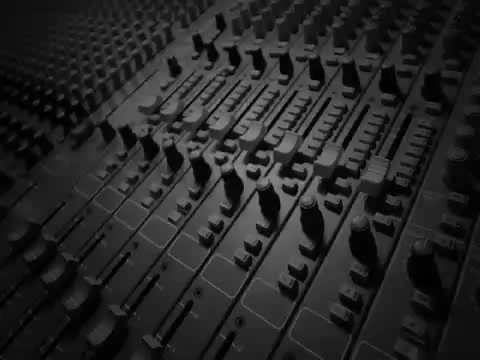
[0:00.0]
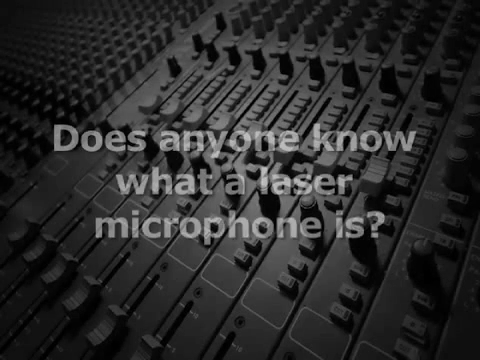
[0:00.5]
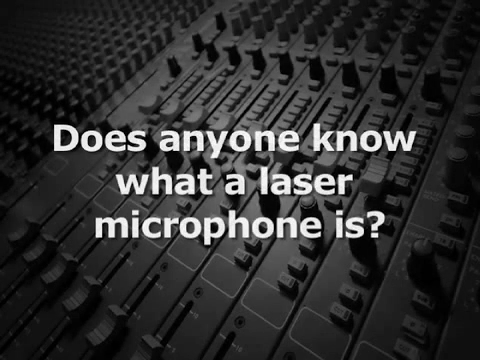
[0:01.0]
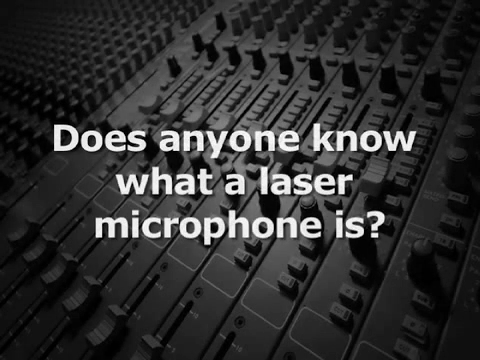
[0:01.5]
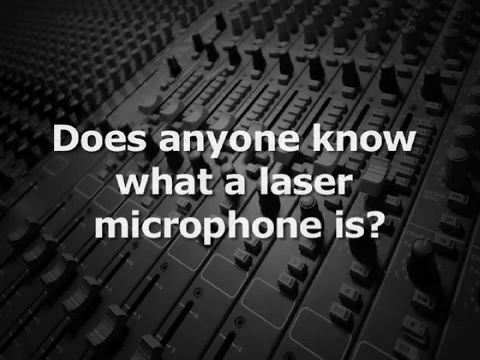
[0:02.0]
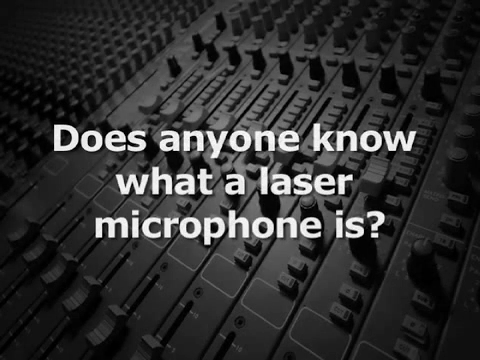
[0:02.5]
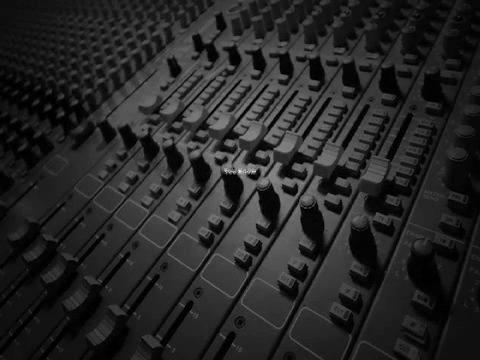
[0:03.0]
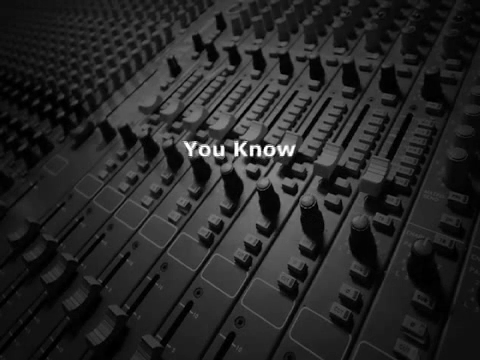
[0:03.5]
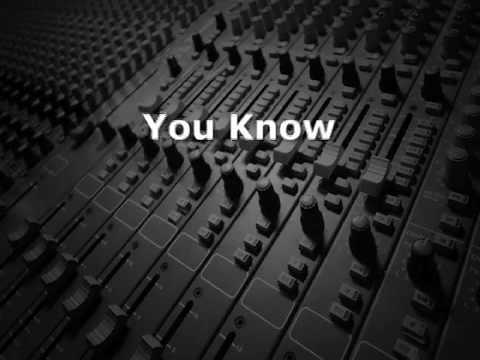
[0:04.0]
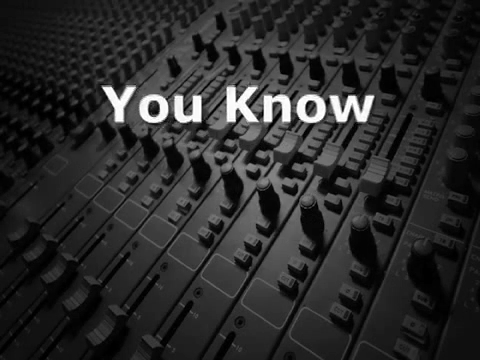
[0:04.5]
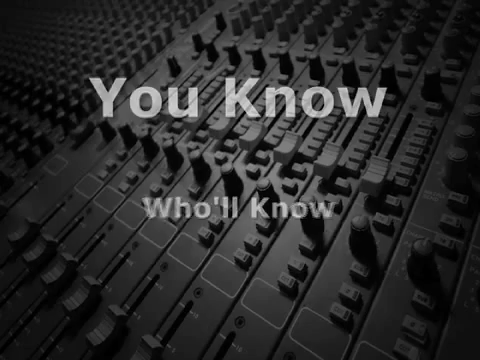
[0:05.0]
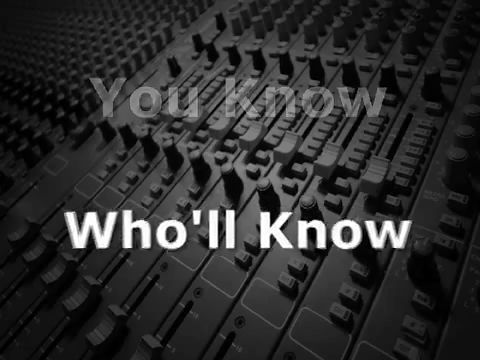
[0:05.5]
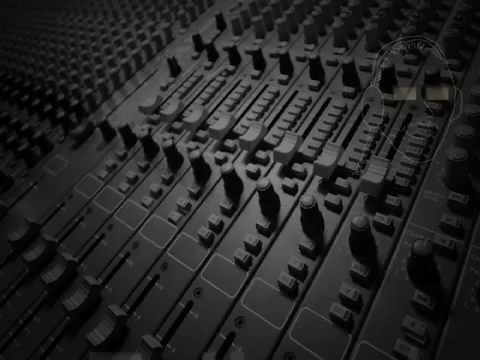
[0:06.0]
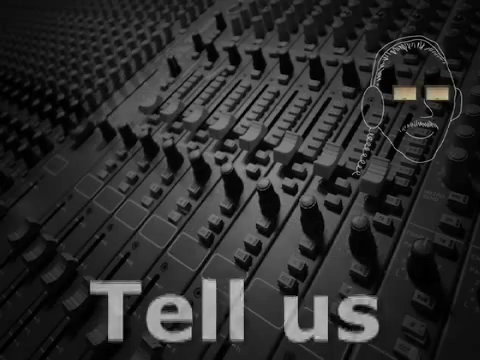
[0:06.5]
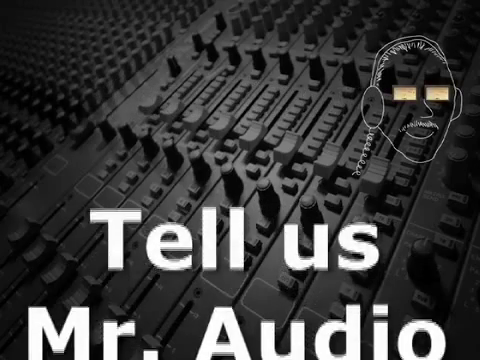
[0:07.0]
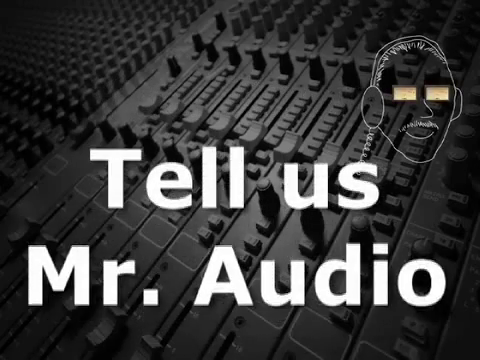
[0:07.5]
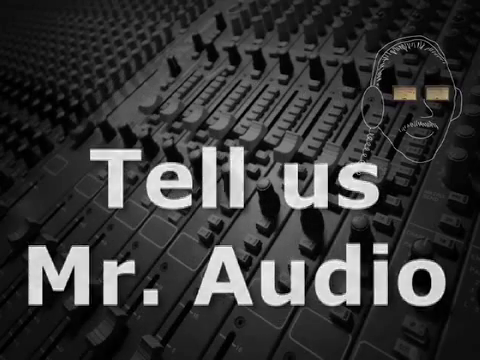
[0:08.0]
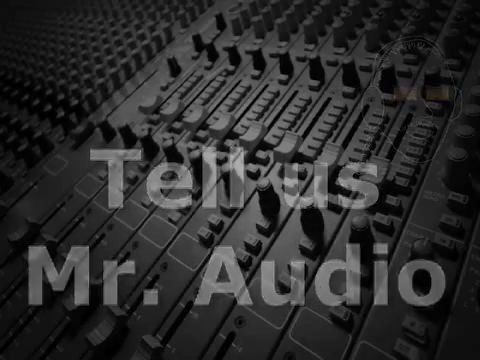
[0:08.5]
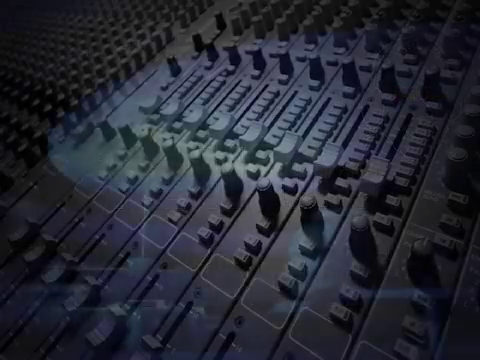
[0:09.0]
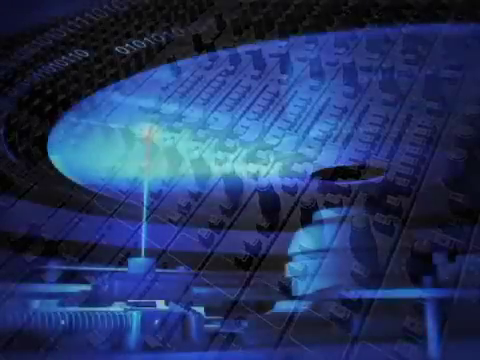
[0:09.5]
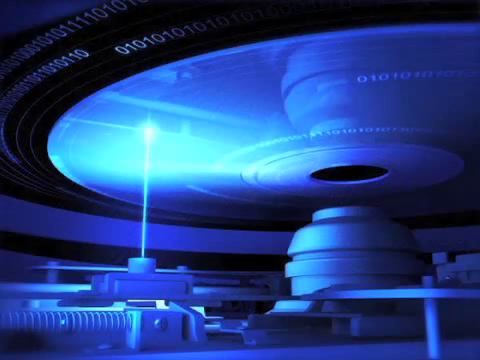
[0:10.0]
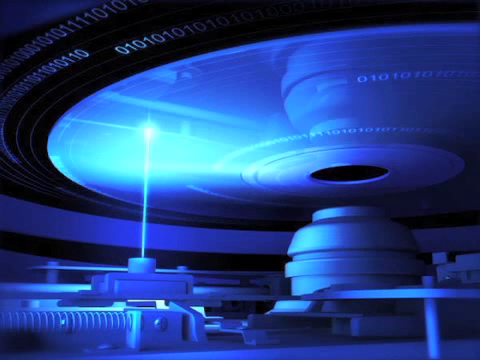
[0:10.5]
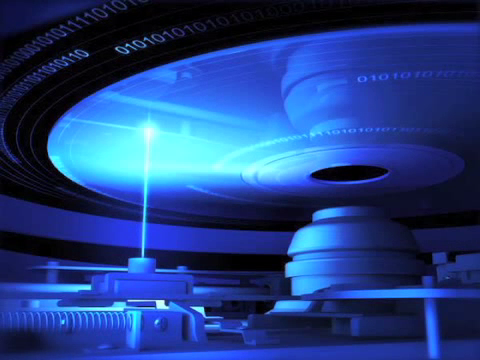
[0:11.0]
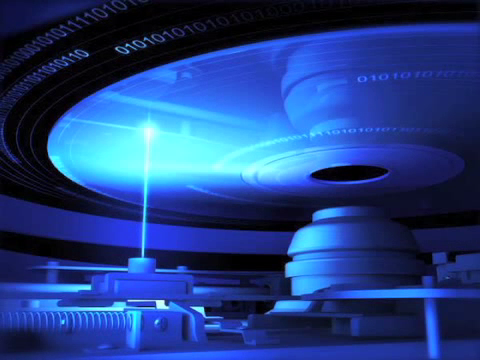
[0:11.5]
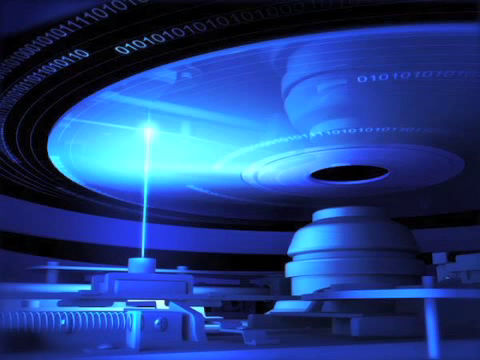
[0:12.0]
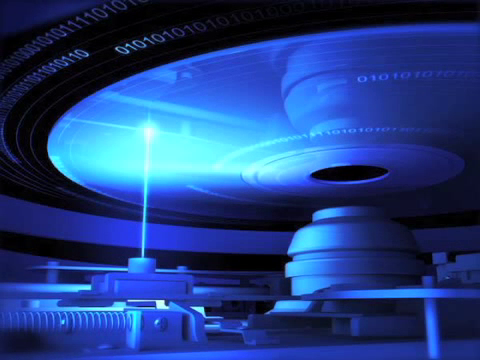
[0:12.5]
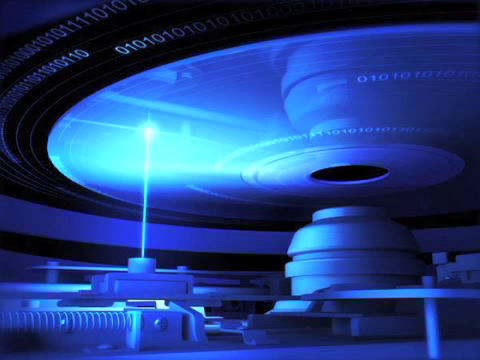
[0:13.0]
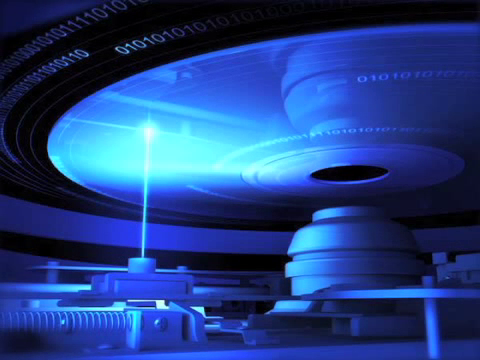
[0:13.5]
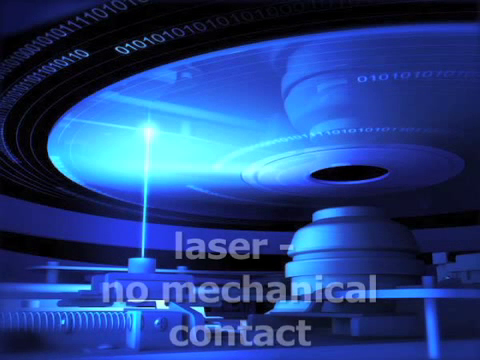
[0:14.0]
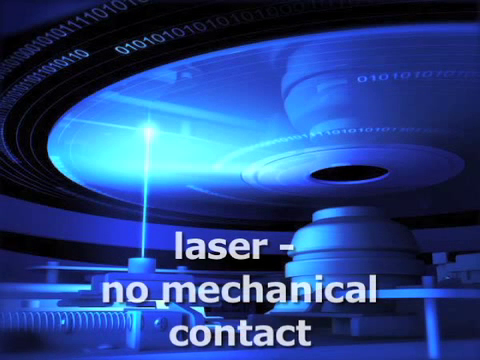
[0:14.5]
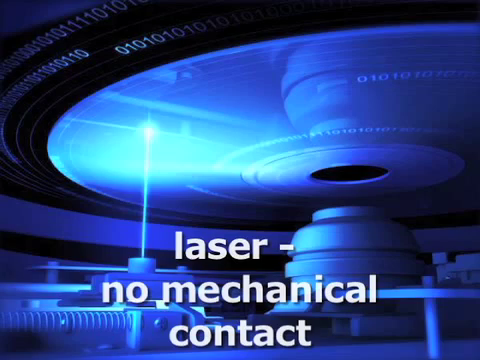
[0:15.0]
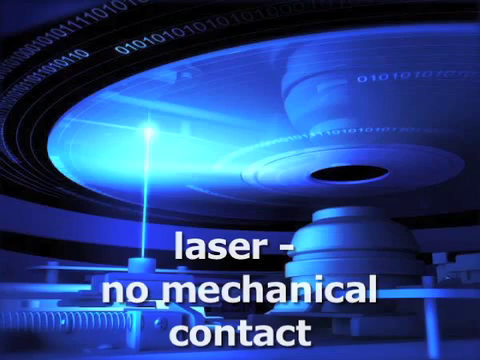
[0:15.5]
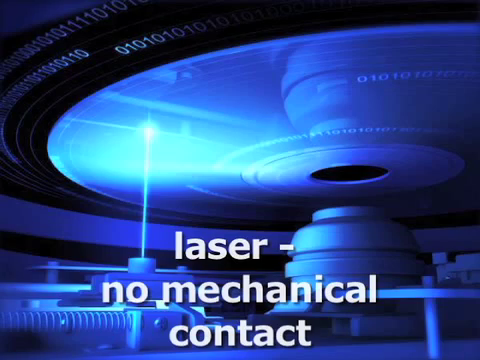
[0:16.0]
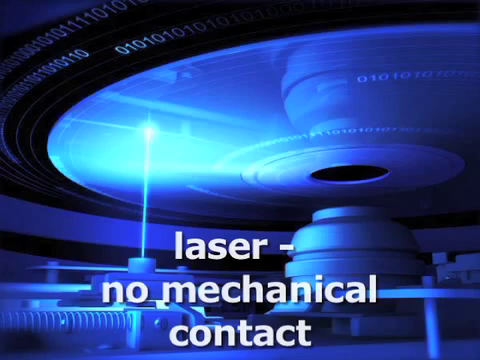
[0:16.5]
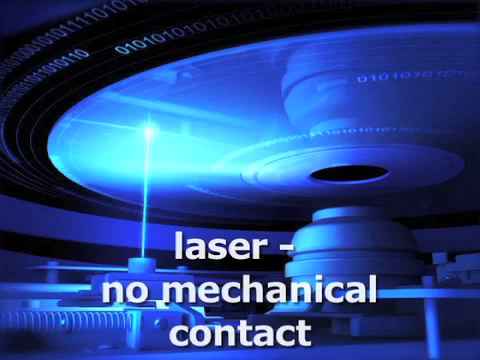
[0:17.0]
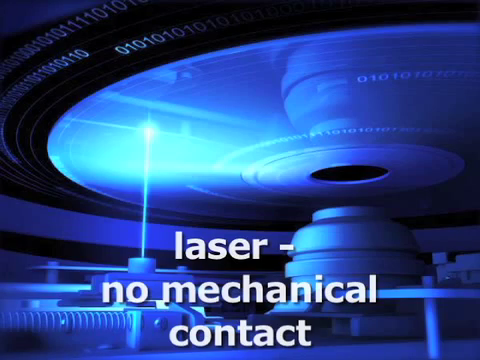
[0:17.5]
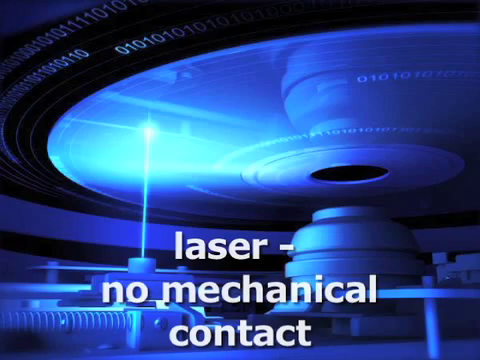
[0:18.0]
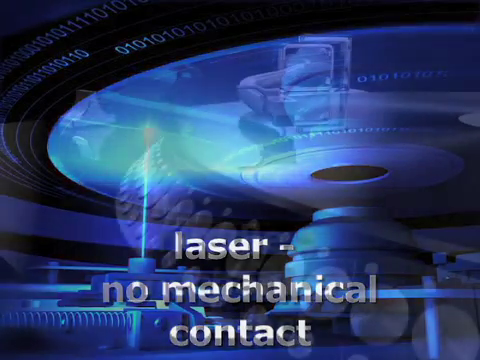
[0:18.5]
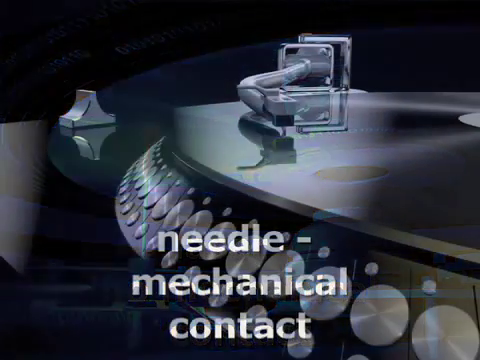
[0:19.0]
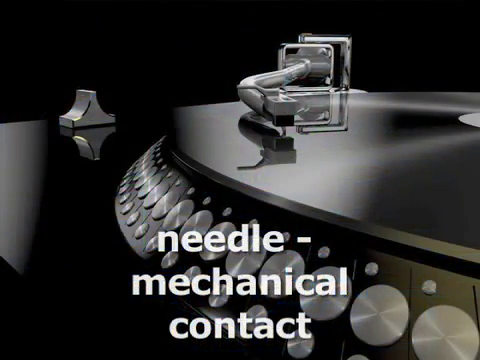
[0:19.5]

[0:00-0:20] The video opens on a dark black background of a studio, with a music studio setup and a laser in the background. The video asks what a microphone is and mentions mechanical microphones and laser microphones. Only a few pieces of text appear, along with a few background images: an image of a studio setup with an image of a laser display.